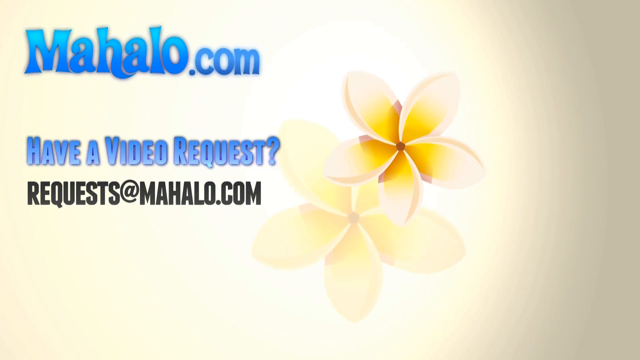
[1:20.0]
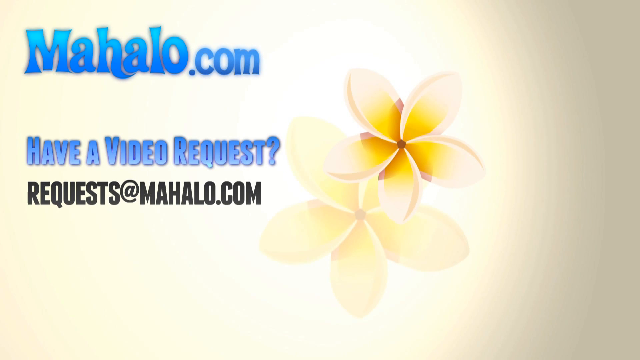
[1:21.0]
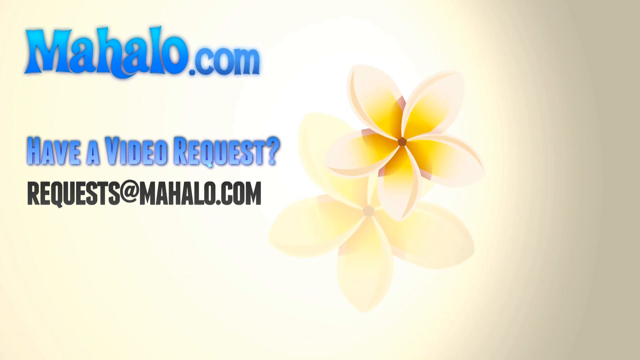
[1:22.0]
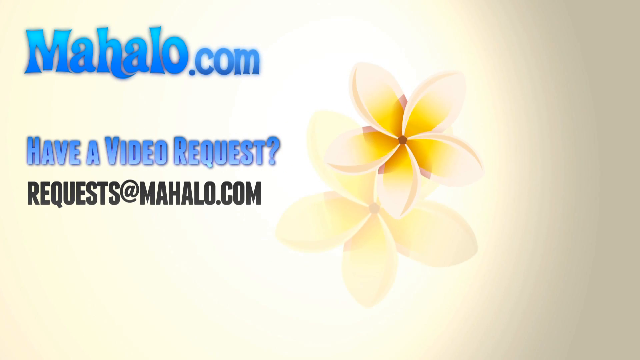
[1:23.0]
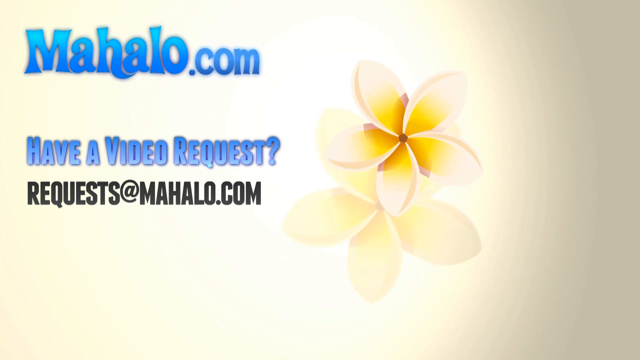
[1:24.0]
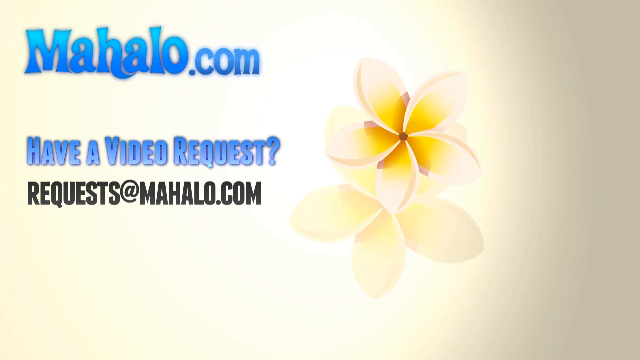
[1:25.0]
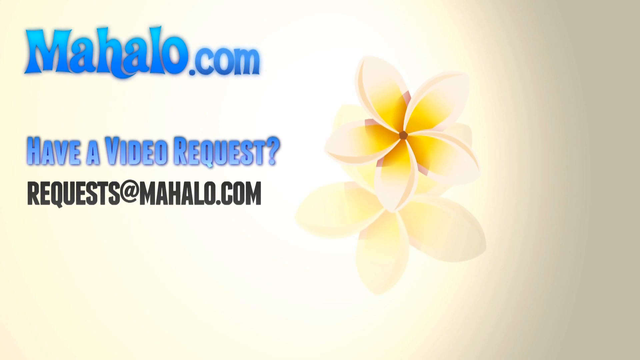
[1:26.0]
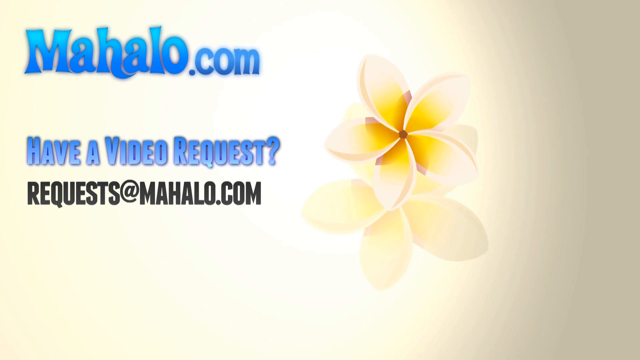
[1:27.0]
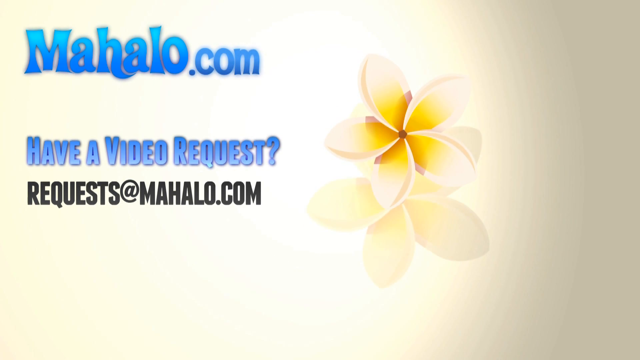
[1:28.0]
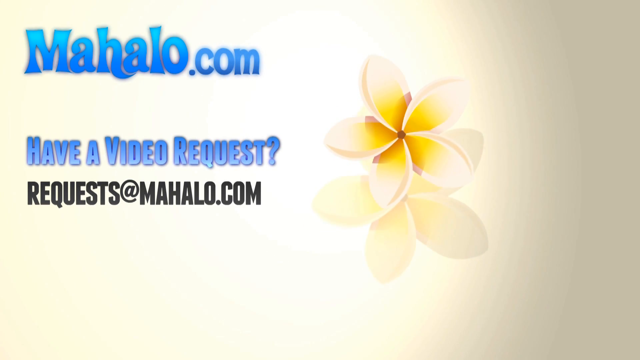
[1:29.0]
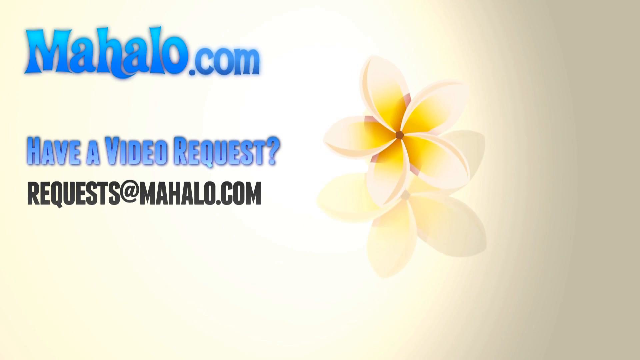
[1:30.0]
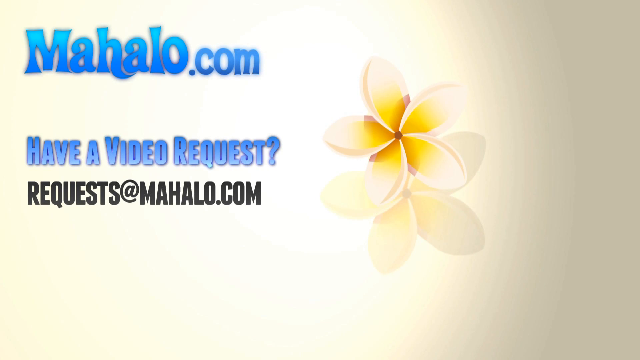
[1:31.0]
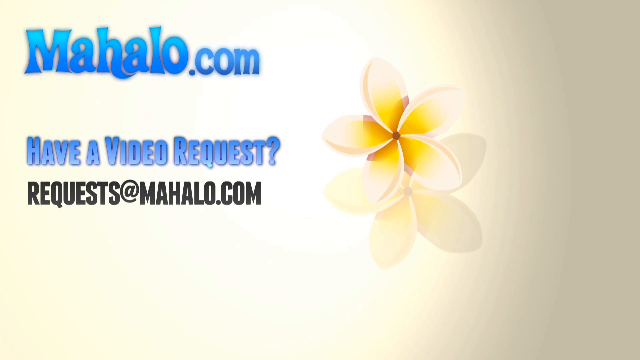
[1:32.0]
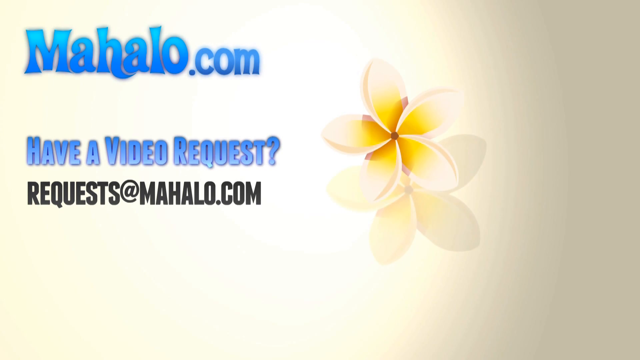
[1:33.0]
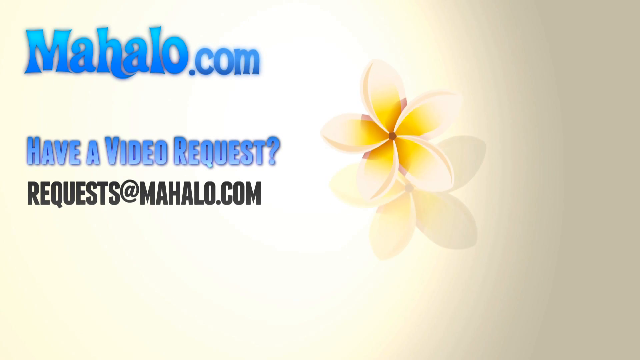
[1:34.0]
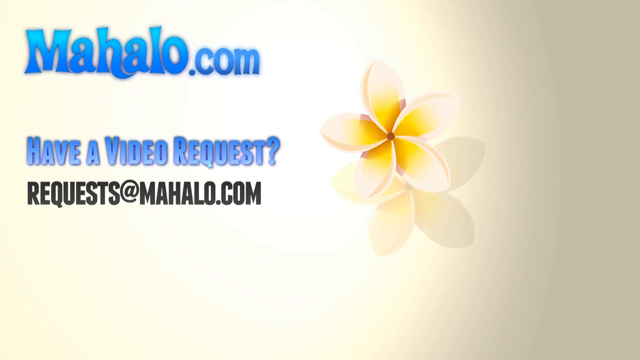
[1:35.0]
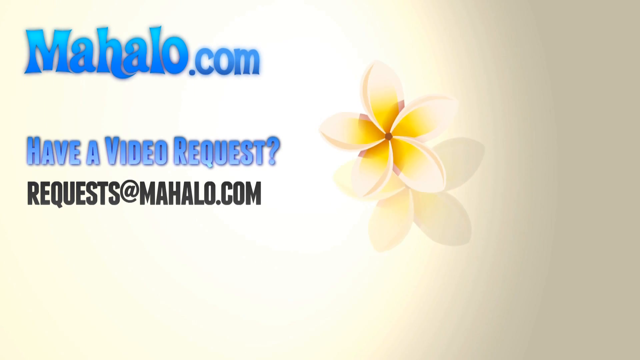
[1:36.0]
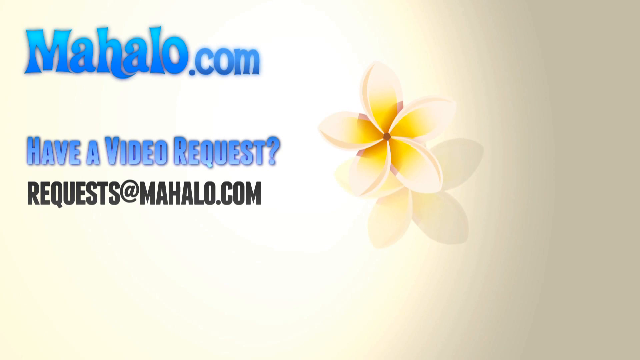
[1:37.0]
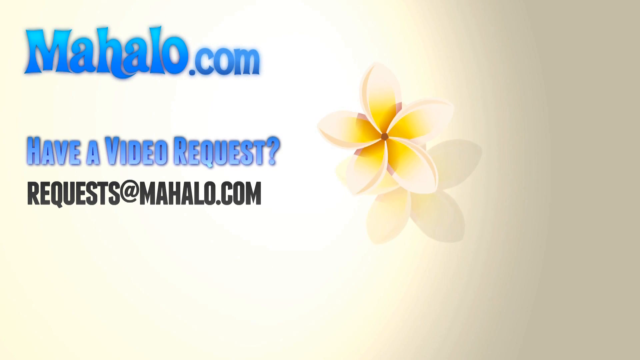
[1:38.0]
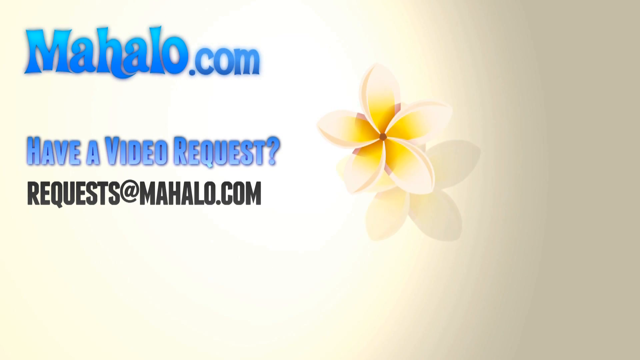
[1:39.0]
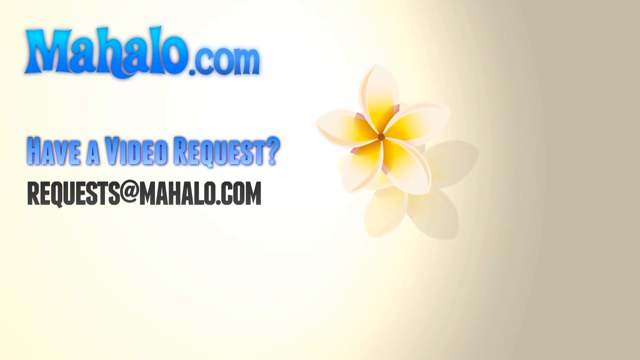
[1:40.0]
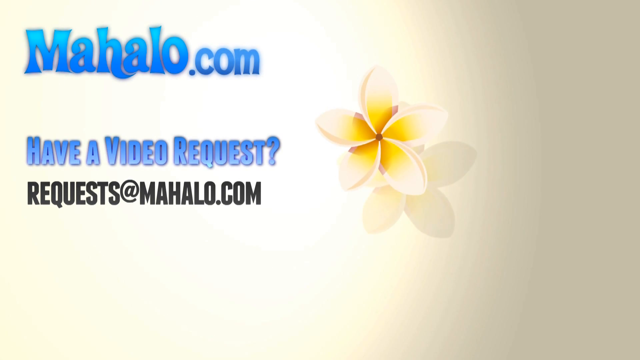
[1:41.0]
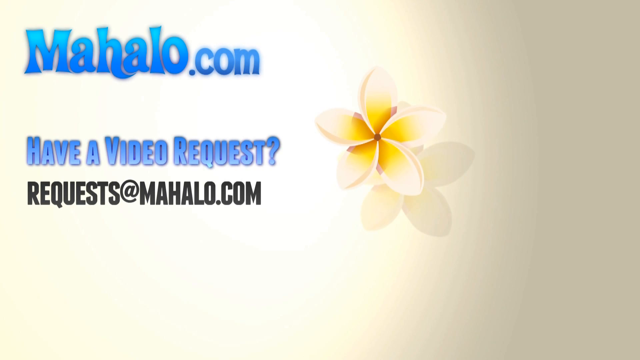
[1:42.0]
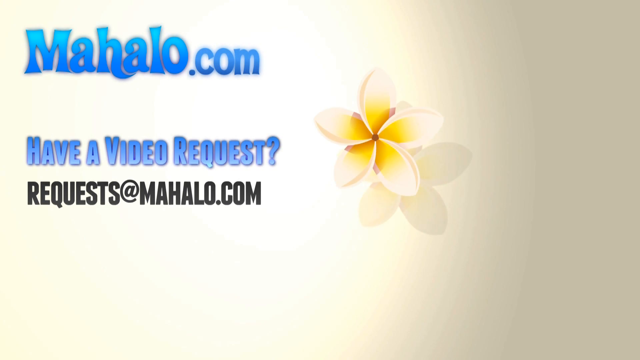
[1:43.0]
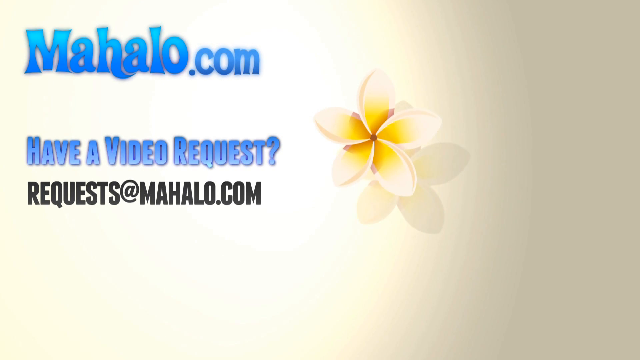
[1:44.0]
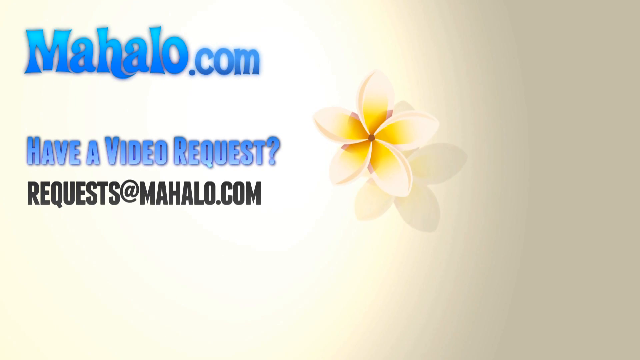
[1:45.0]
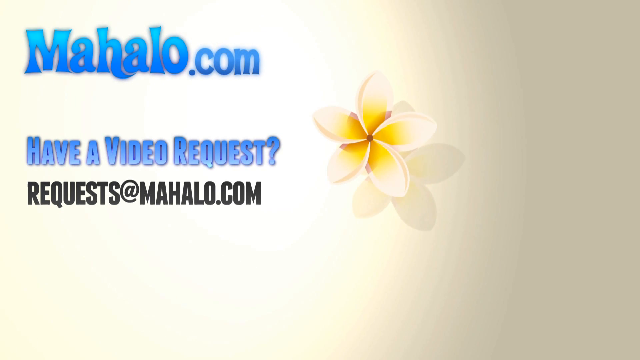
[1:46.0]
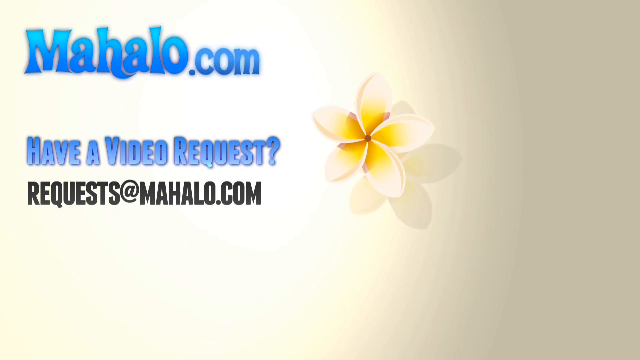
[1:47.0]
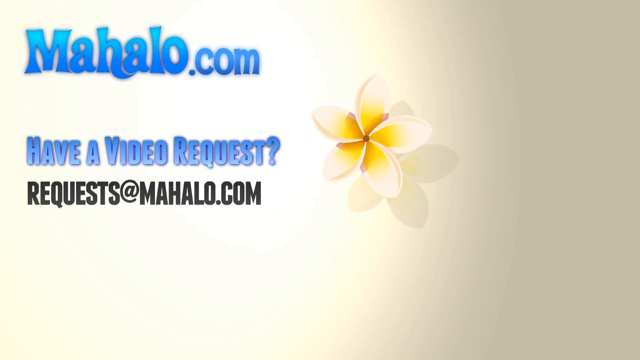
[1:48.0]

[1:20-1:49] A screen with a yellowish background shows two lotus flower effects in the middle. On the left side, in blue, is a website reading "mahalo.com"; below it in blue it says "have a video request," and below that in black is written "requests at mahalo.com." The two lotus flowers in the middle are placed one above the other and are surrounded by a white highlight within the yellow screen. In this animation, the flowers slowly drift upward and seem to drift away, getting smaller and smaller, while the text on the left keeps the same color, position and size until the video ends.